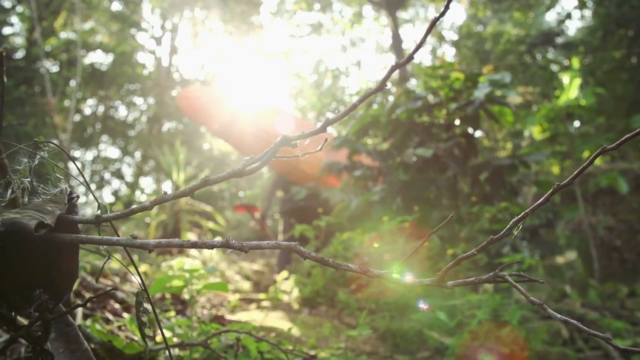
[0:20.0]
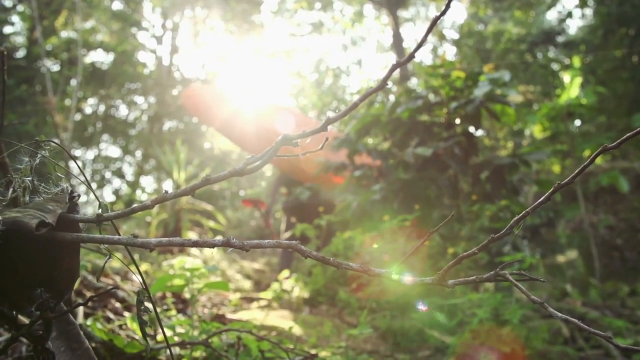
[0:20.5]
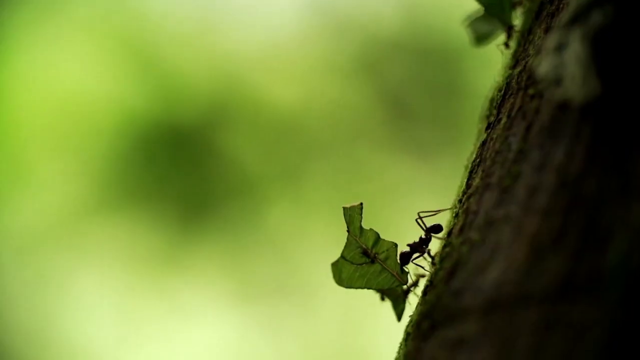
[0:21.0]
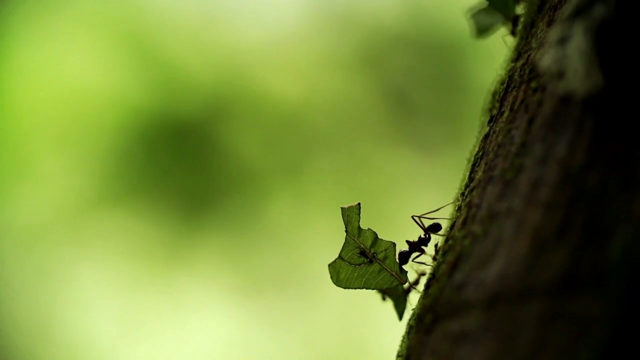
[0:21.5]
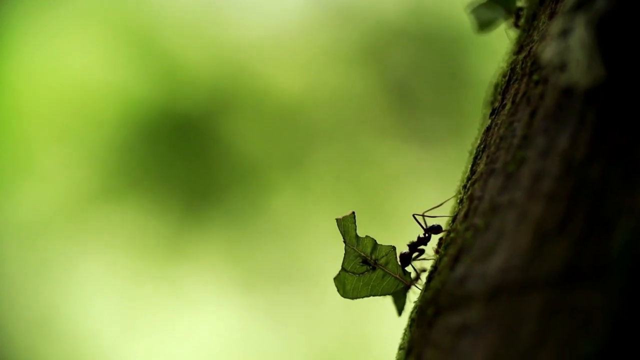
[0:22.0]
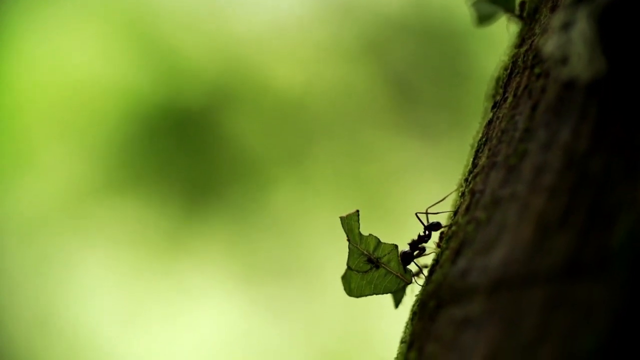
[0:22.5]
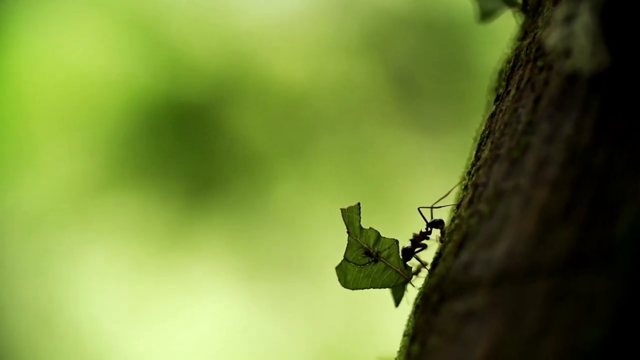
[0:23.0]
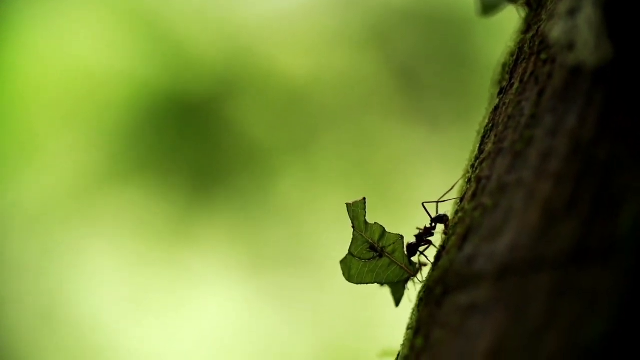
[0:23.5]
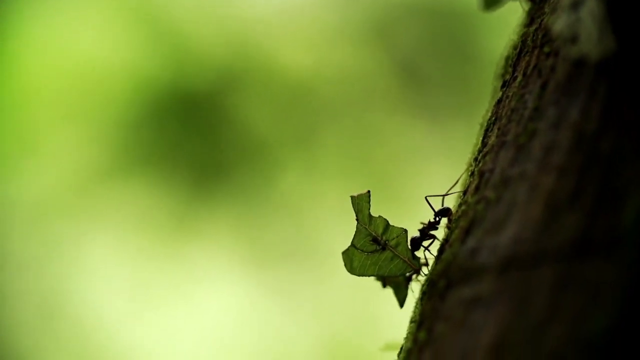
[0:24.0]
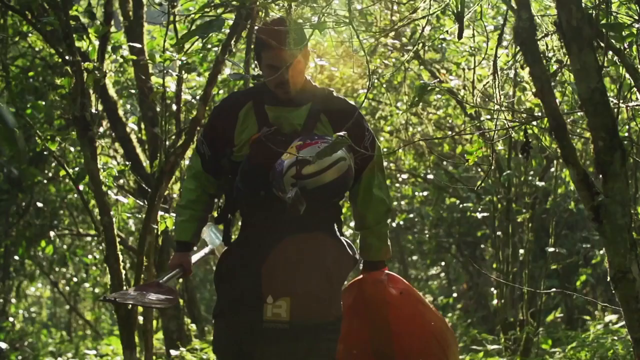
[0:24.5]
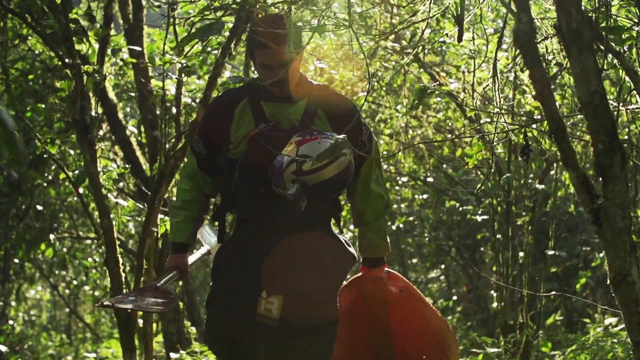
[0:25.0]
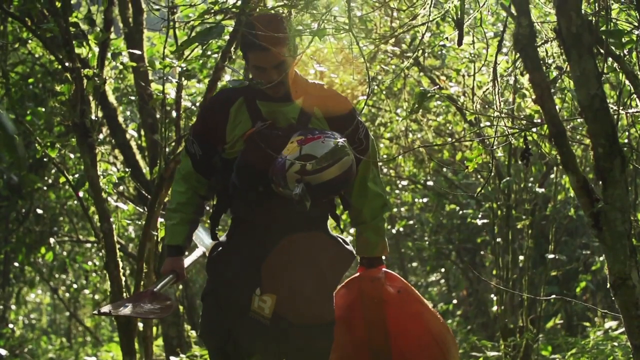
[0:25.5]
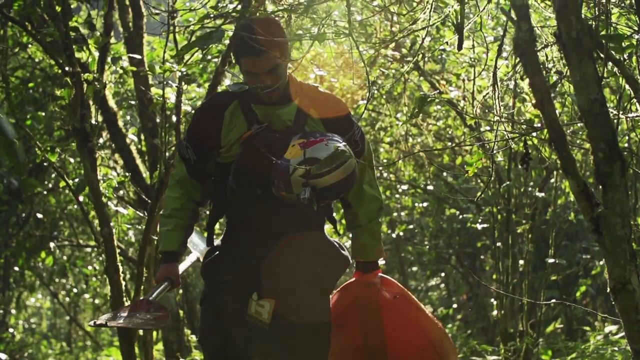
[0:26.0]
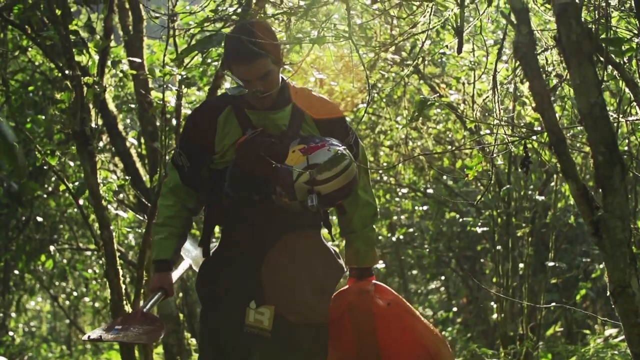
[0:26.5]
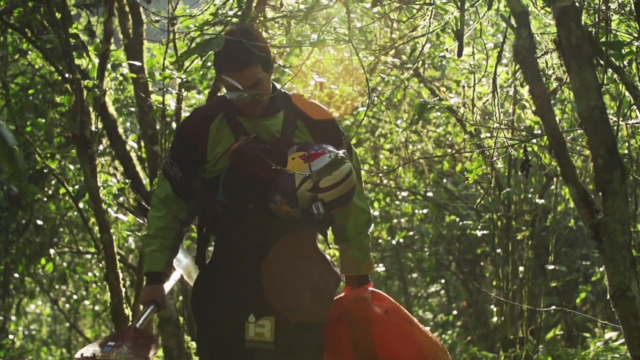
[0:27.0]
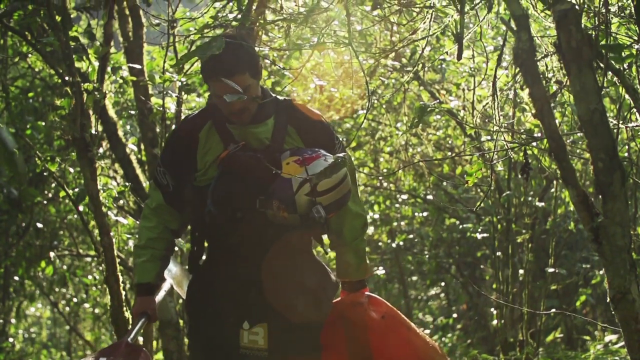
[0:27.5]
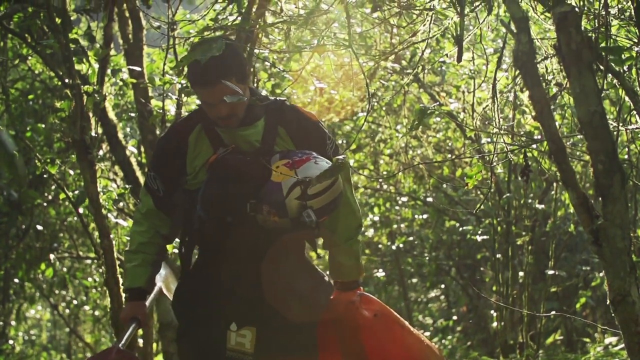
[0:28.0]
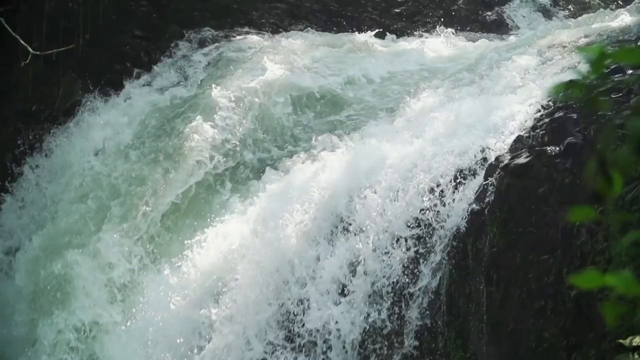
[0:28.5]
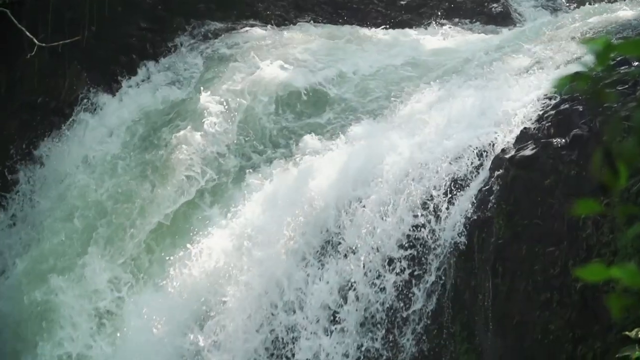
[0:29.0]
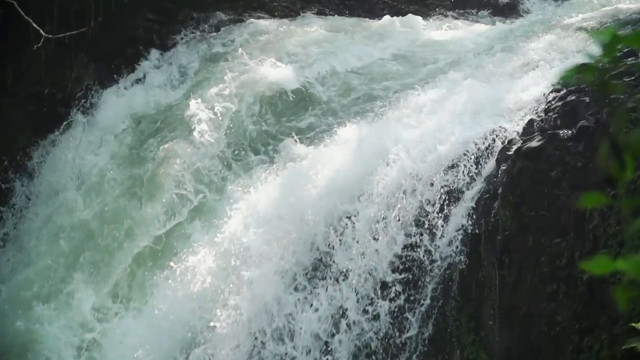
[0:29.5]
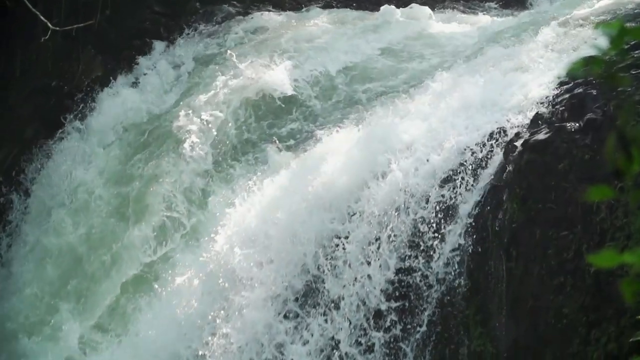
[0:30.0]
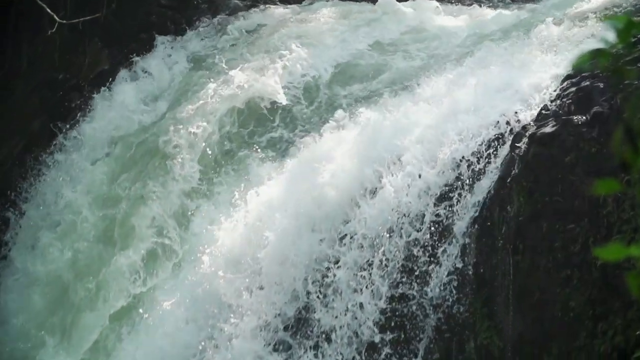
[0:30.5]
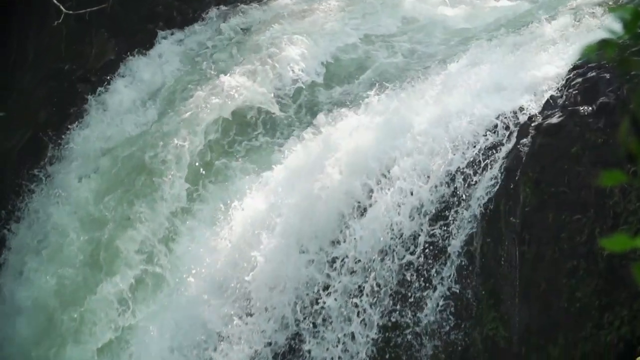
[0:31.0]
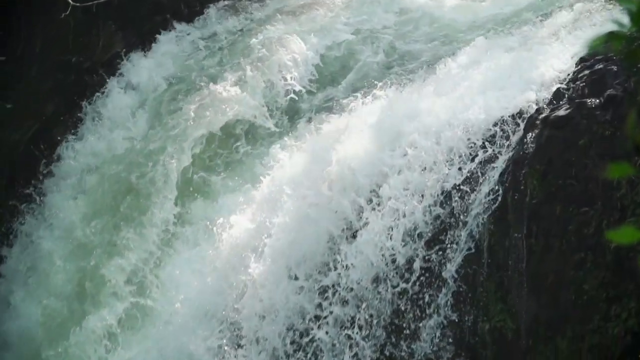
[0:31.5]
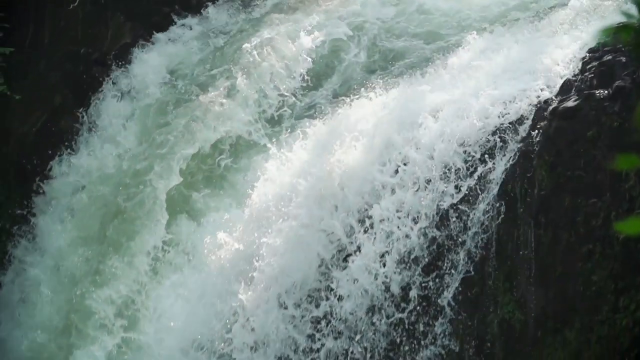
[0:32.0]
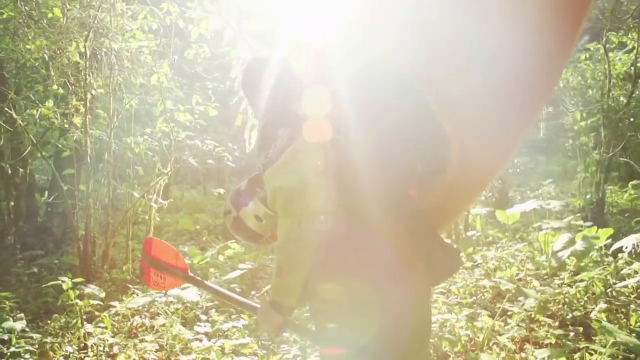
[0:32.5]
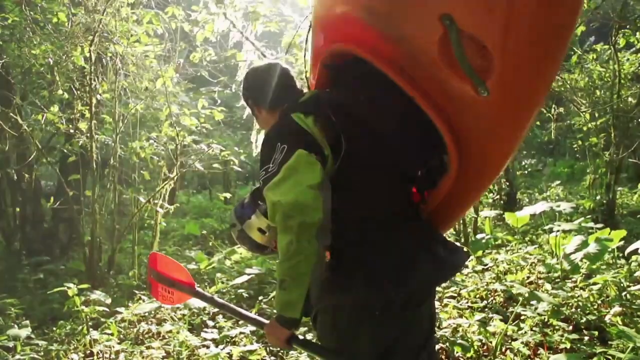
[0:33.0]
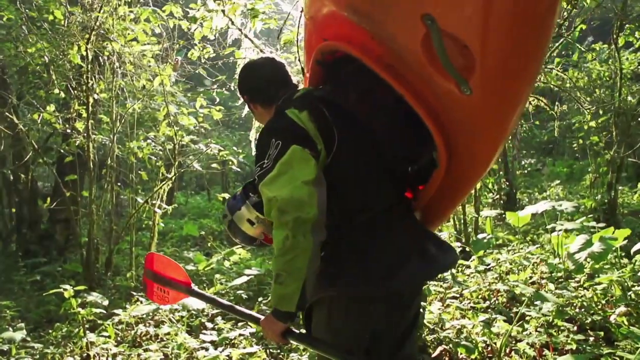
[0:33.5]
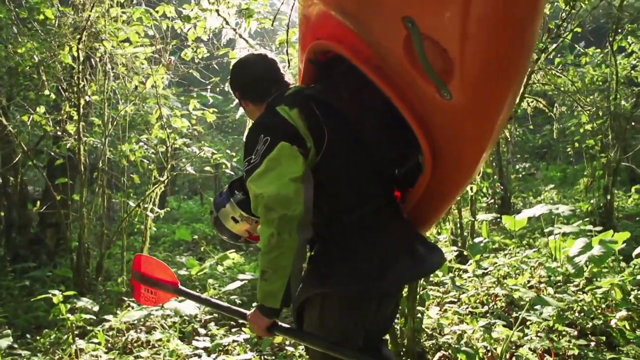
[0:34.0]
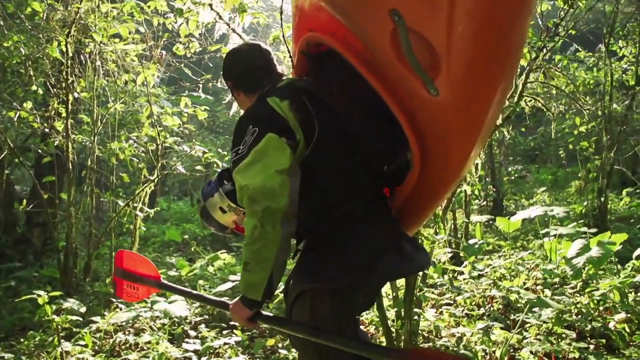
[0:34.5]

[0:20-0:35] Several outdoor scenes follow. First, an ant carries a leaf up the side of a tree; the leaf is about double the size of the ant, and the shot is very zoomed in, with the out-of-focus background appearing just green. Next, a man walks through some trees carrying an orange canoe. He wears a helmet with a Red Bull logo and a black and green jumpsuit, and appears to be carrying a paddle in his hand. A waterfall on a river follows, with white water cascading over the edge and into the air. The same man is then shown carrying the kayak up on his shoulder as he walks through the trees. White subtitles appear at the bottom of the screen across the scenes: during the ant shot they read "it is like an invitation to go beyond," and later "to me, the rivers are the blood vessels of the earth because when everything goes from the earth to the river and then into the sea."